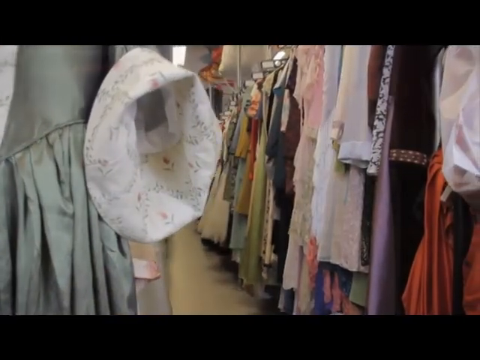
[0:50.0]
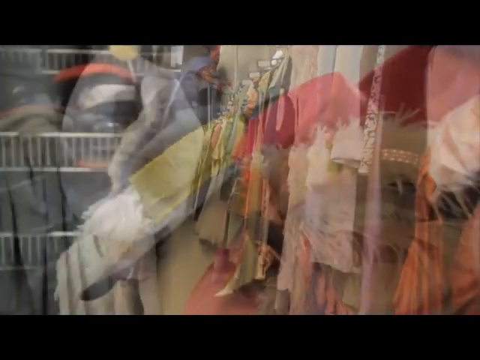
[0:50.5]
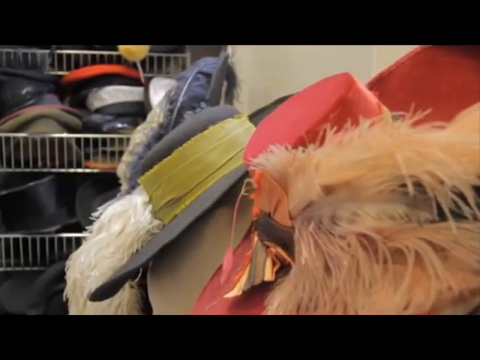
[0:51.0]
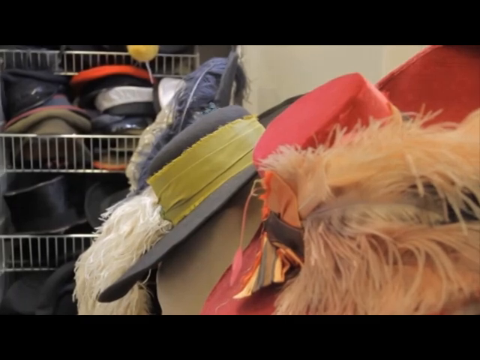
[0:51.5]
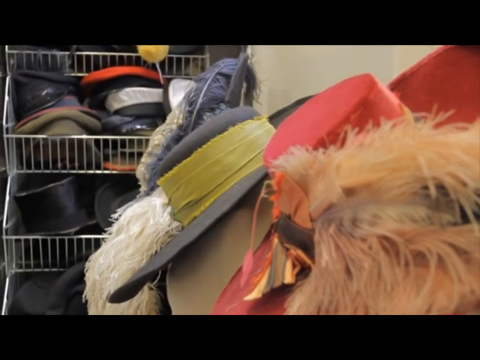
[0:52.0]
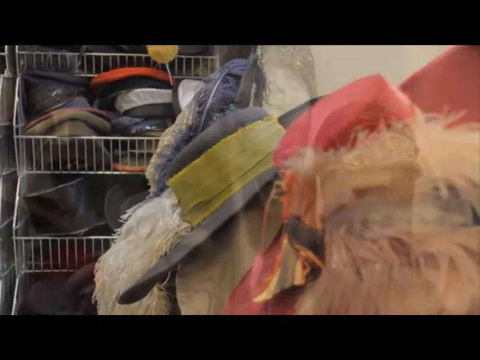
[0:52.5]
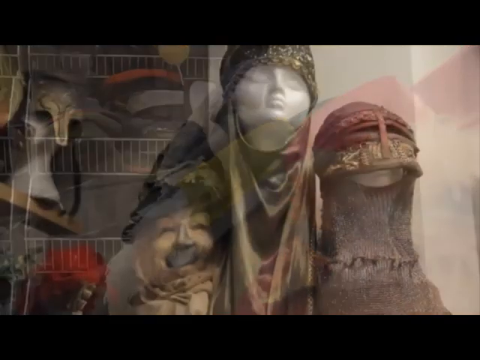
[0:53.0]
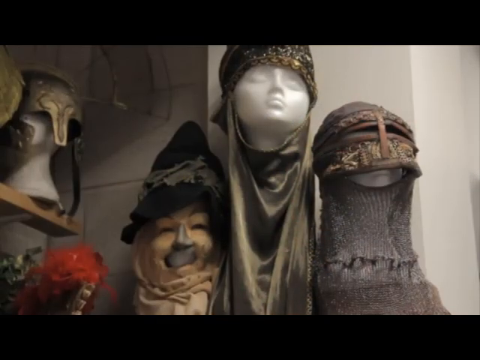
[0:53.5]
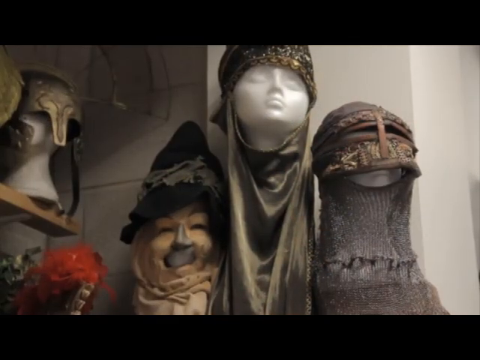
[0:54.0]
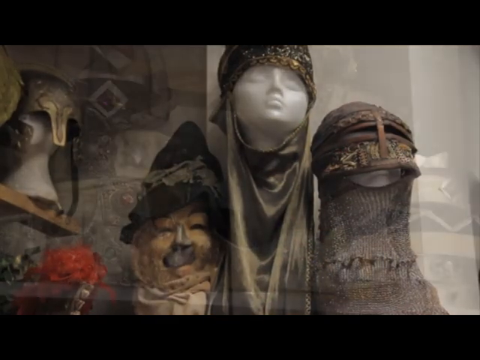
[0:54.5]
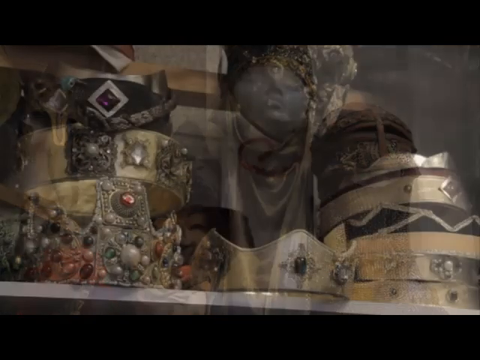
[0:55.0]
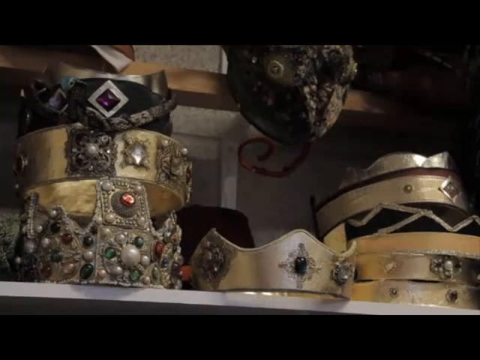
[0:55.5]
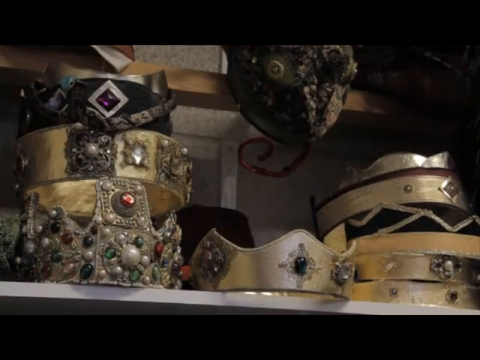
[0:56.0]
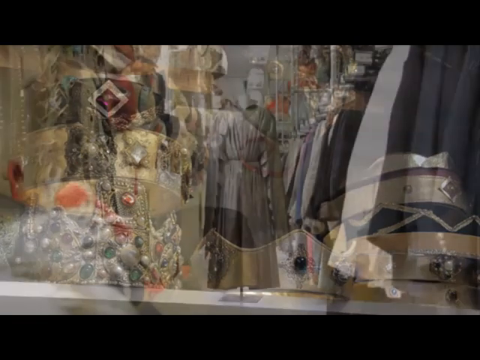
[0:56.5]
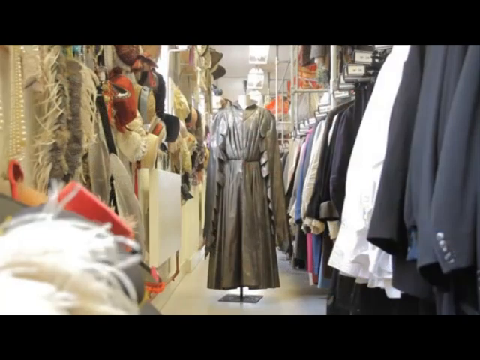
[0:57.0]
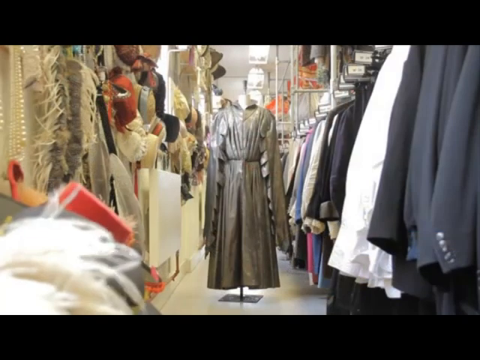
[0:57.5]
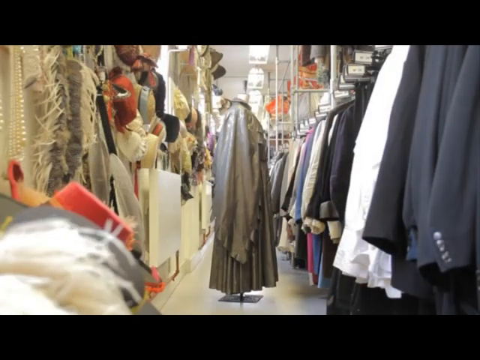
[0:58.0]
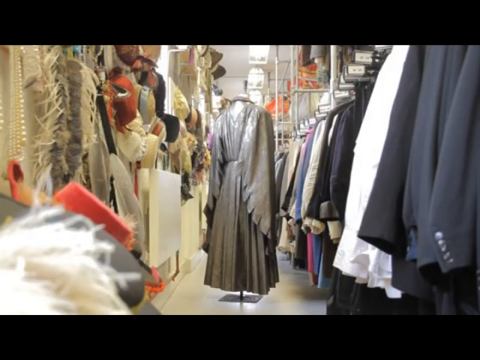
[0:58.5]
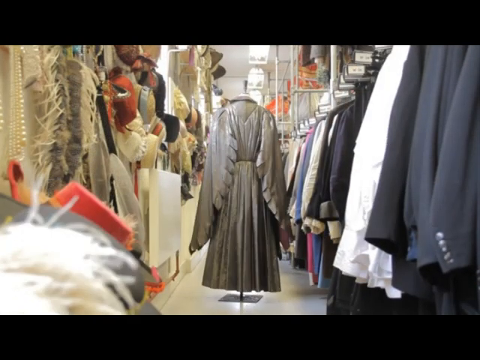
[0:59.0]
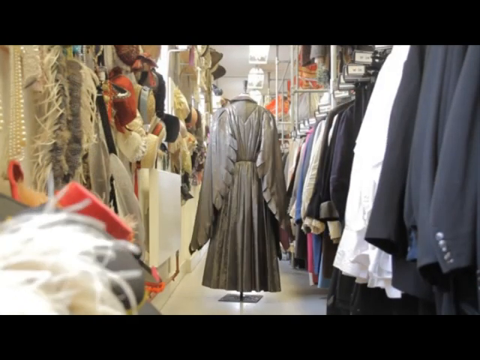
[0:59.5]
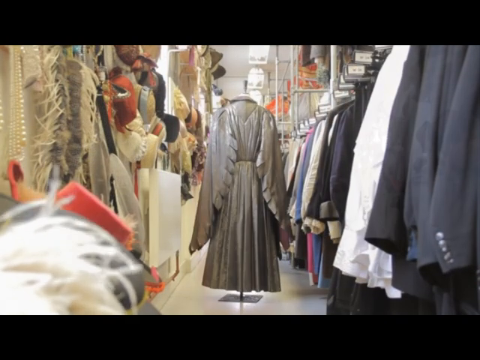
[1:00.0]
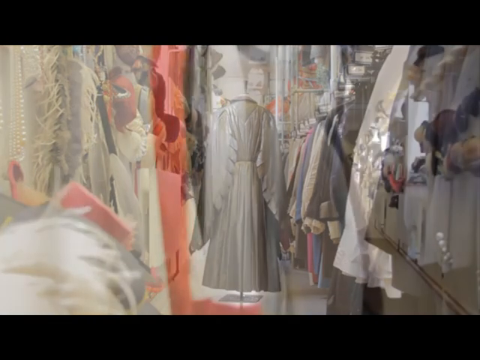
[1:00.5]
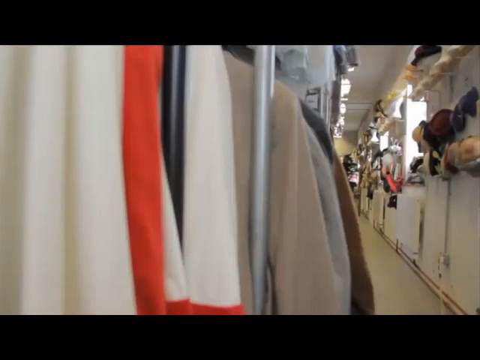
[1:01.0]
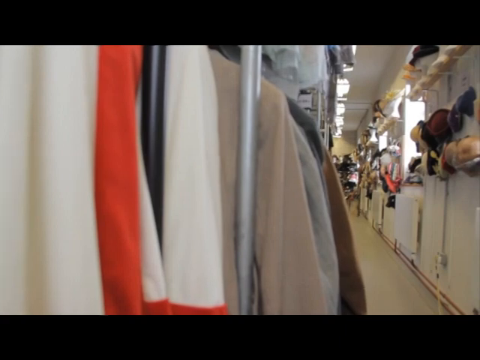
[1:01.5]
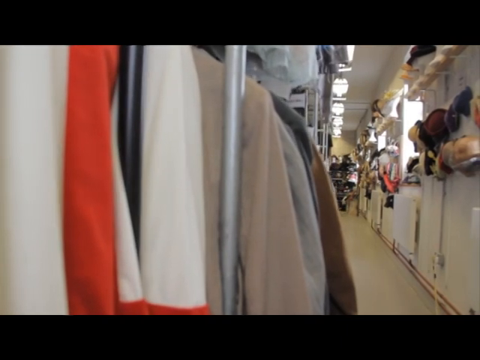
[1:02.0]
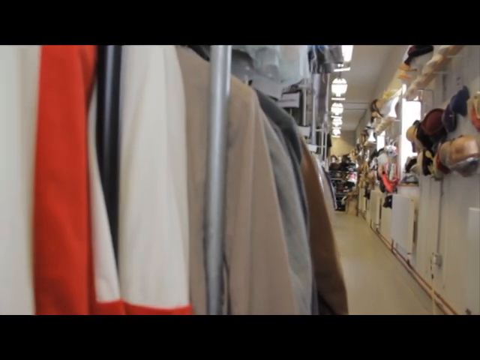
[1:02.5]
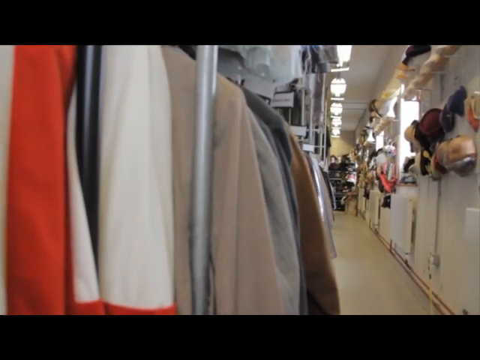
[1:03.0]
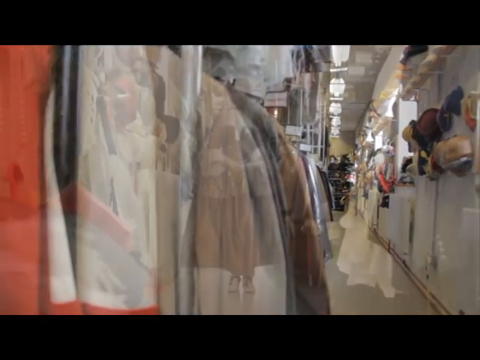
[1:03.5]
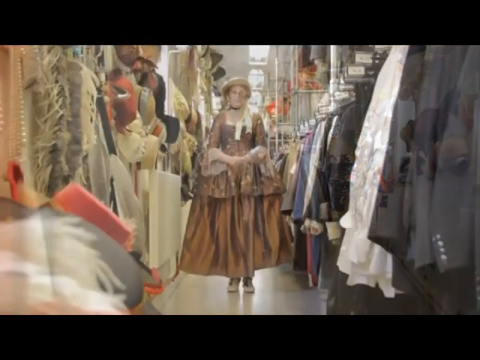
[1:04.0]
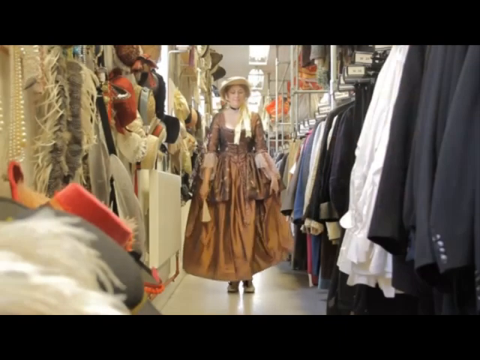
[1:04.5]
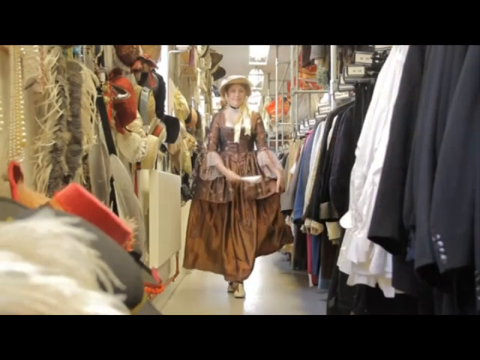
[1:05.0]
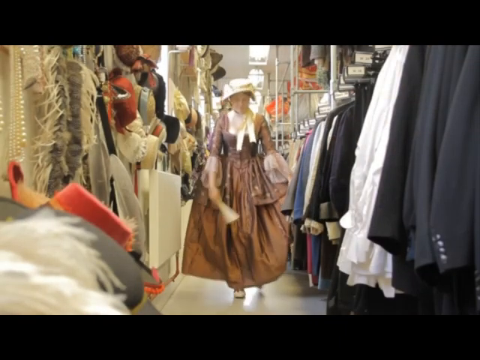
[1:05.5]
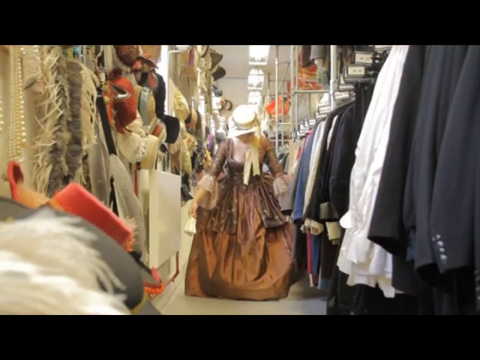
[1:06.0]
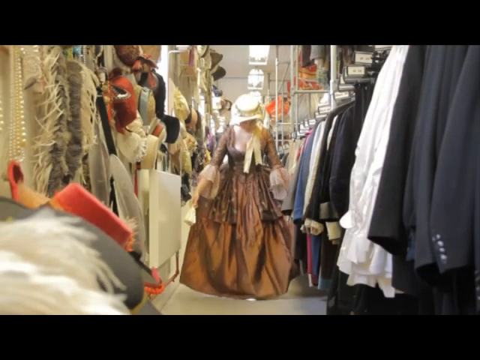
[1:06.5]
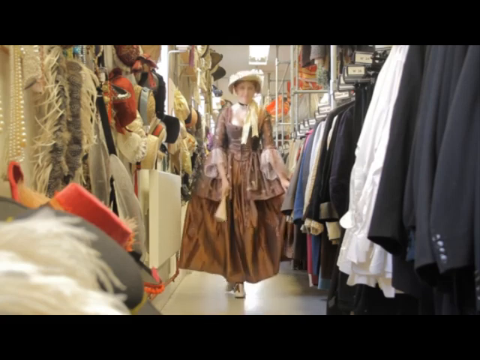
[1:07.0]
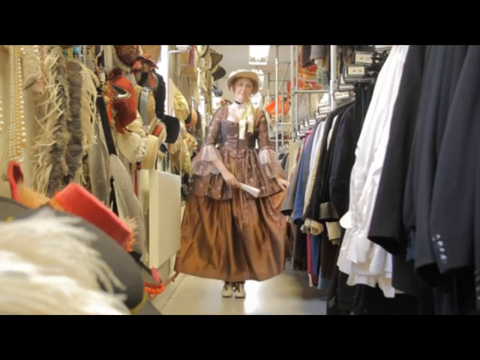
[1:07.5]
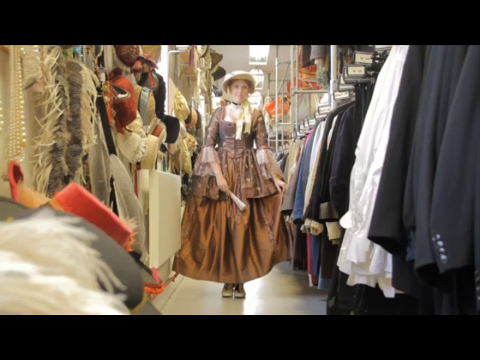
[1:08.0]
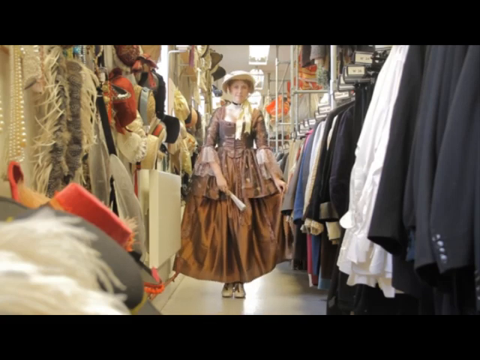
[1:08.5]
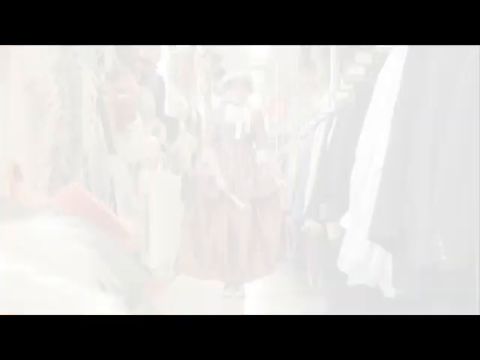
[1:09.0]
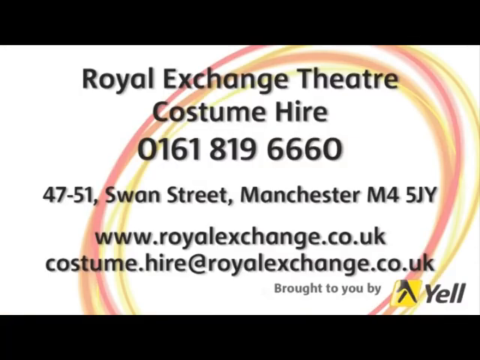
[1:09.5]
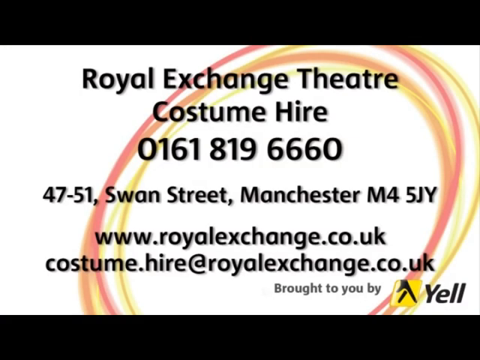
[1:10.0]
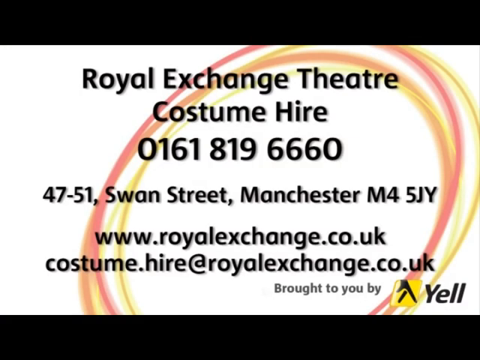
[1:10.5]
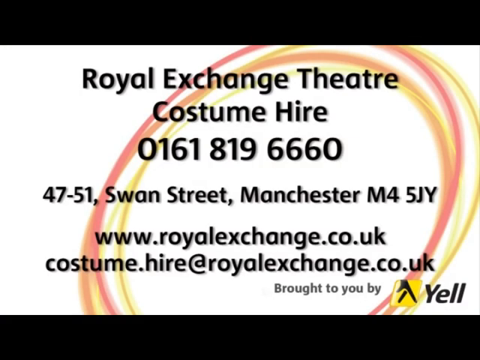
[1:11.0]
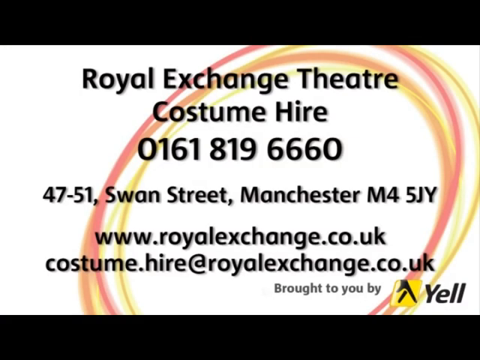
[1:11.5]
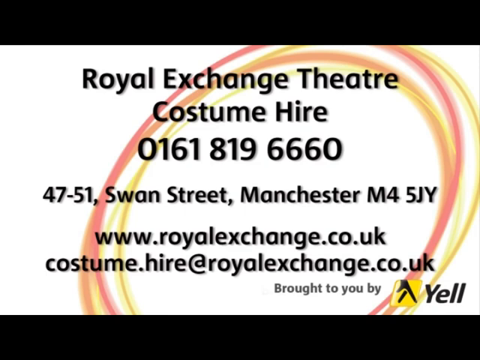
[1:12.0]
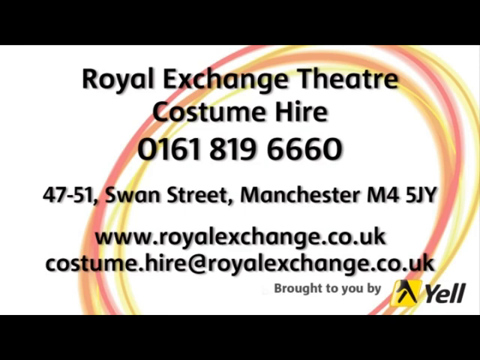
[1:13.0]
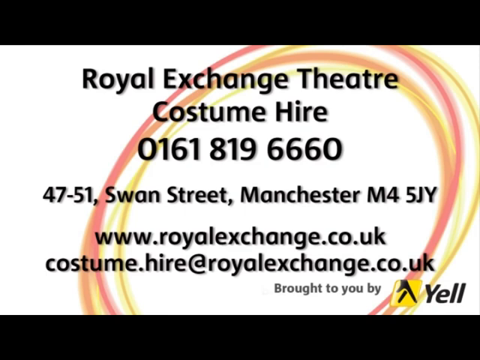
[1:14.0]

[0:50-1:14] The camera shows a large assortment of hats, including a red hat with feathers and a gray hat with a yellow band that has white feathers, with many bins in the background that look like they hold men's hats; one bin has top hats in it. Mannequin heads are shown with different head coverings: one looks like maybe a knight's neck and head covering, another is maybe fabric covering the head and neck like that worn by someone who lives in the desert, and another maybe looks like the Scarecrow's hat and head covering from the Wizard of Oz. A selection of crowns is stacked on a shelf. A dress is shown in the center of an aisle and is turned around; its arm parts almost look like wings. Another aisle has hats on one side and shirts or something on the other. A person wearing an old-fashioned dress, head covering and old-fashioned shoes stands in the center of the aisle, taking the place of the mannequin that was there, and curtsies while holding an old-fashioned fan in their right hand. The screen then changes to text reading "Royal Exchange Theatre costume hire", along with a phone number, an address, a website and an email address.